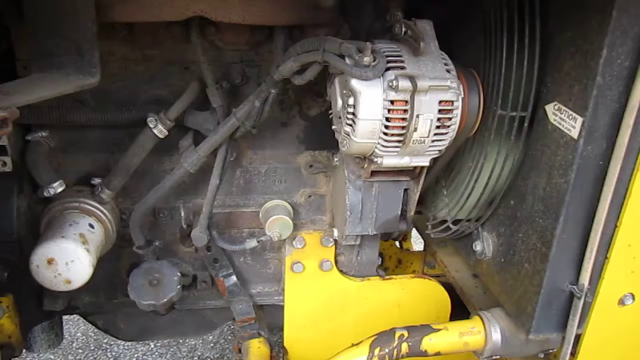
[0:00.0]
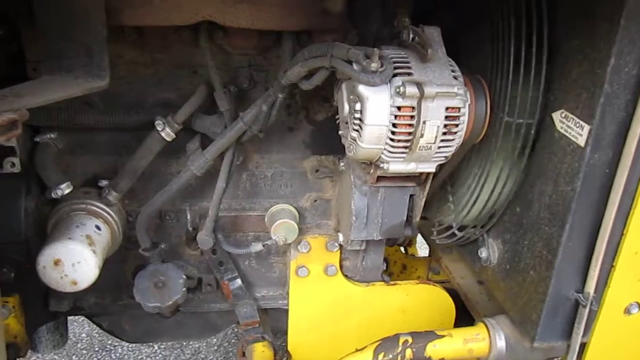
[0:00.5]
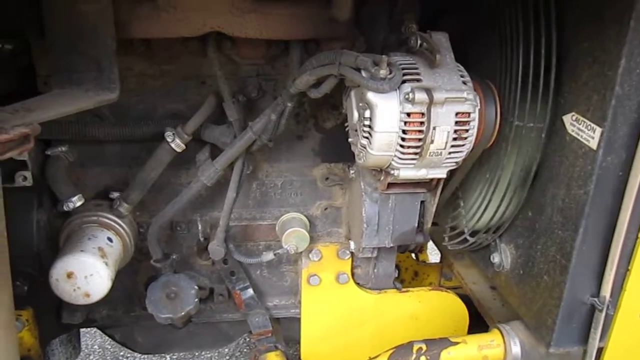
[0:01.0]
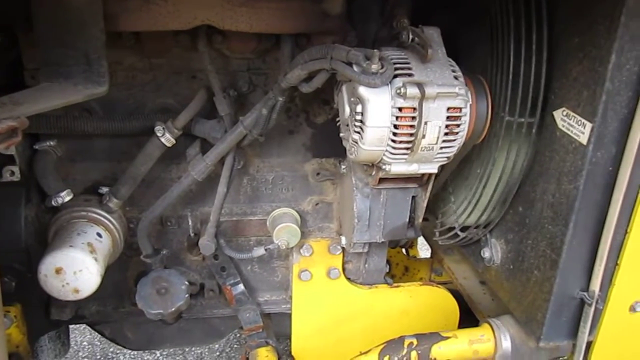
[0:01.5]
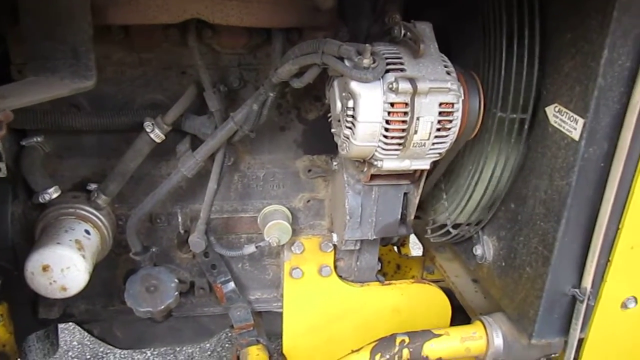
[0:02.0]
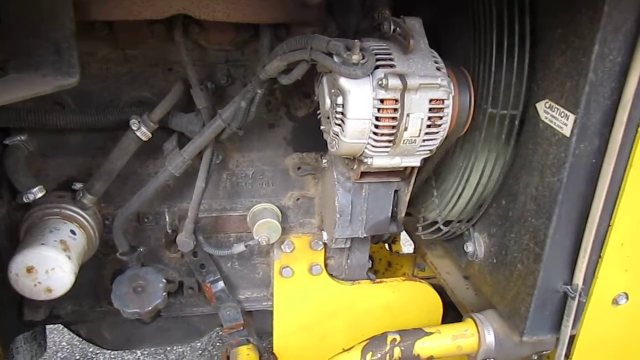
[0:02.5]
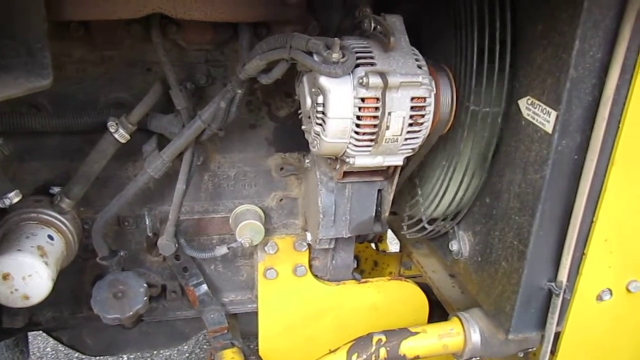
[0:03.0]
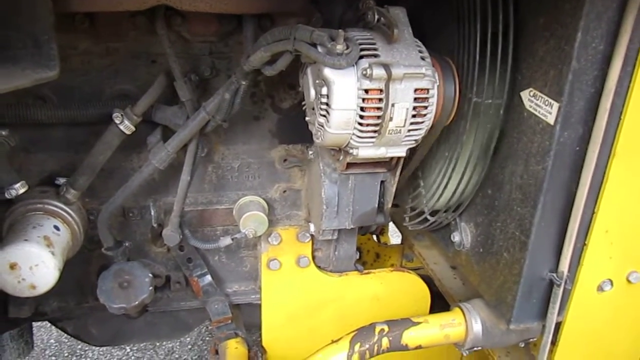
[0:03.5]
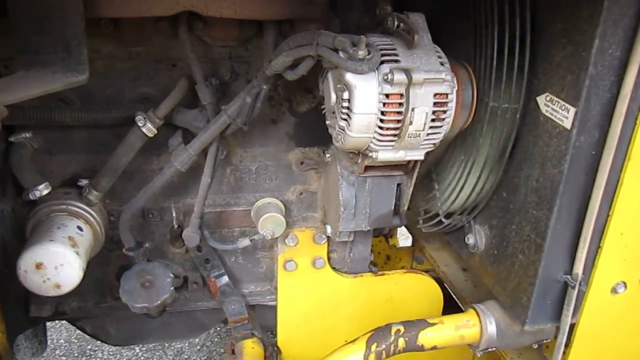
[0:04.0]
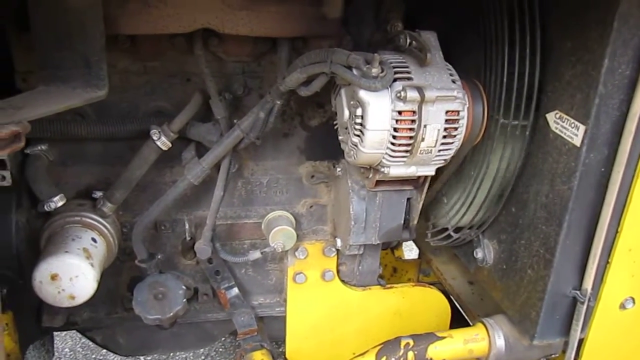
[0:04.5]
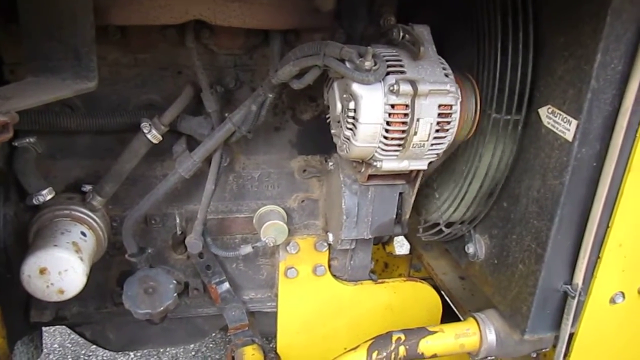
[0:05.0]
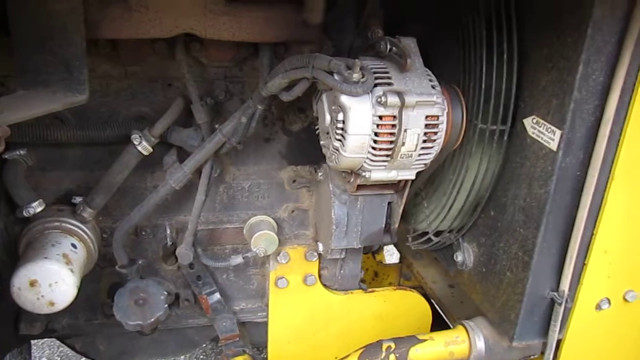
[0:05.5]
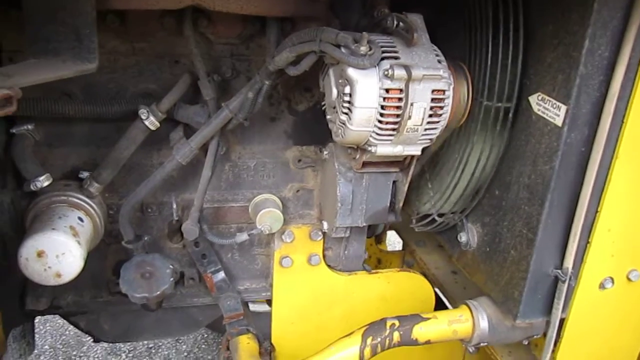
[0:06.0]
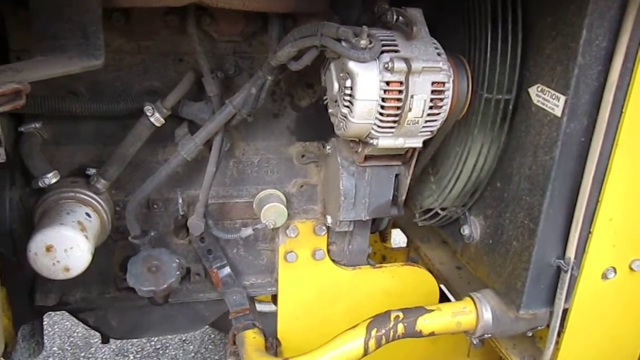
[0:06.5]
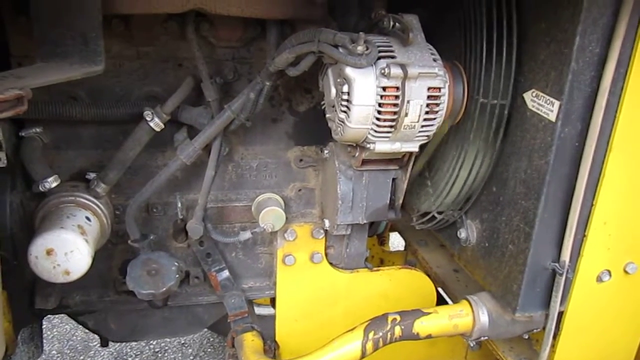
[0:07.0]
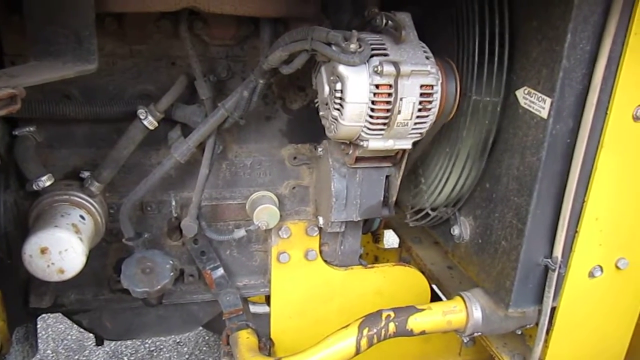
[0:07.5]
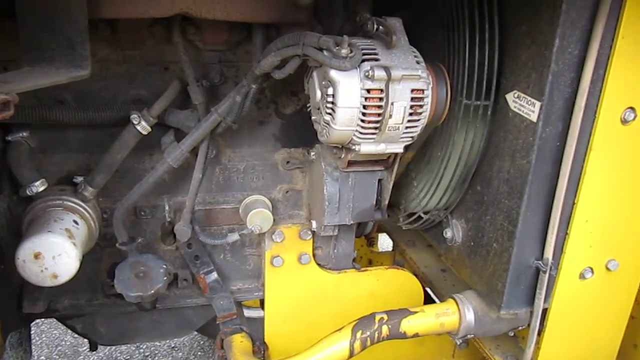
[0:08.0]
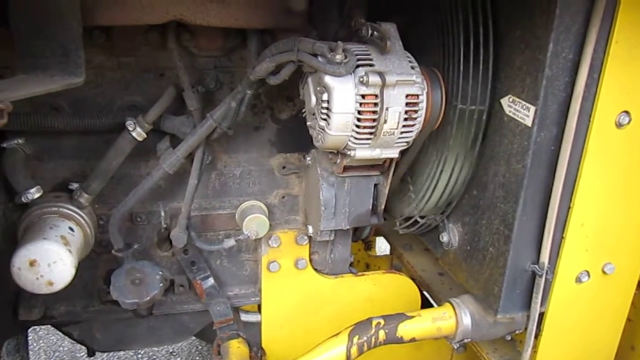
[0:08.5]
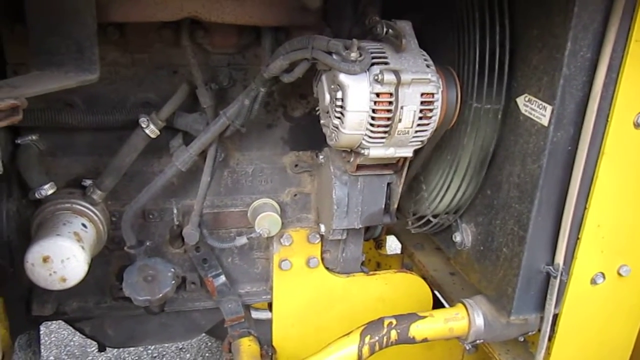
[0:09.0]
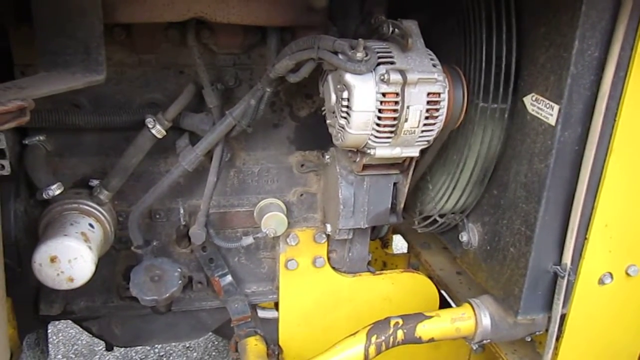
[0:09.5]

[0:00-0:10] What looks like an engine is visible on a vehicle that appears yellow, with its outside or trim apparently yellow. A caution sticker off to the right side carries about five words of information, too small to make out. The engine is attached to a fan, and the fan and a belt on the engine are moving pretty fast. A few dirty pipes are connected to the engine.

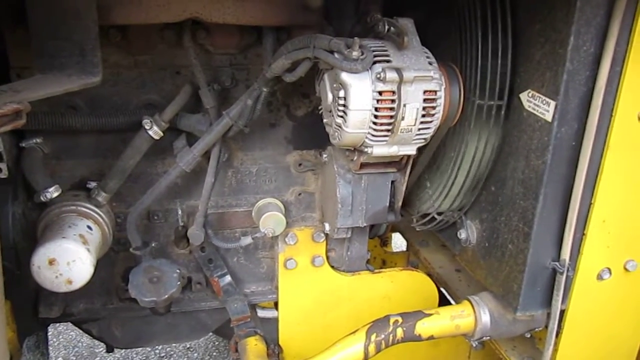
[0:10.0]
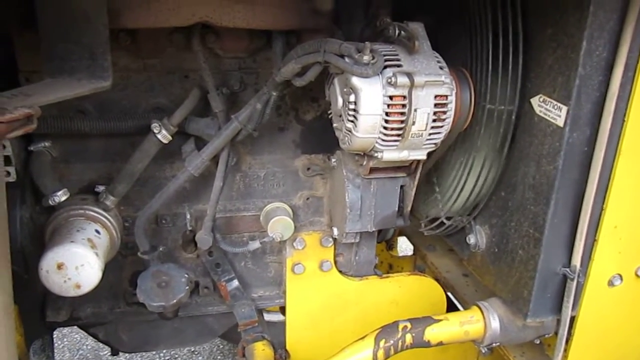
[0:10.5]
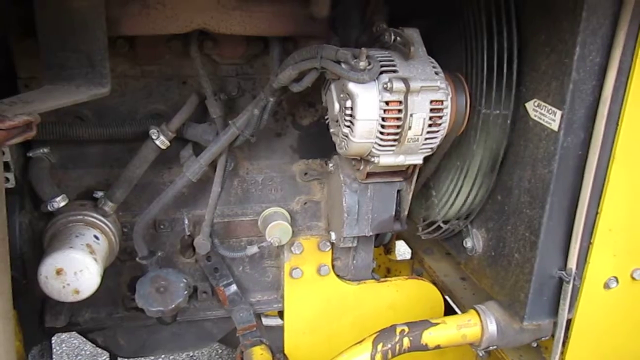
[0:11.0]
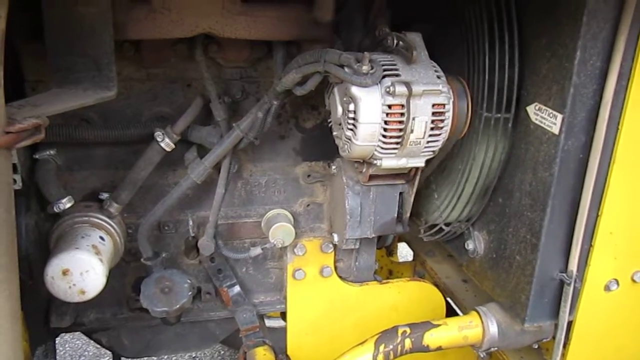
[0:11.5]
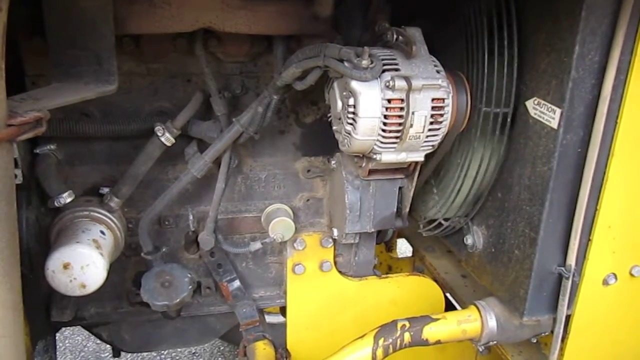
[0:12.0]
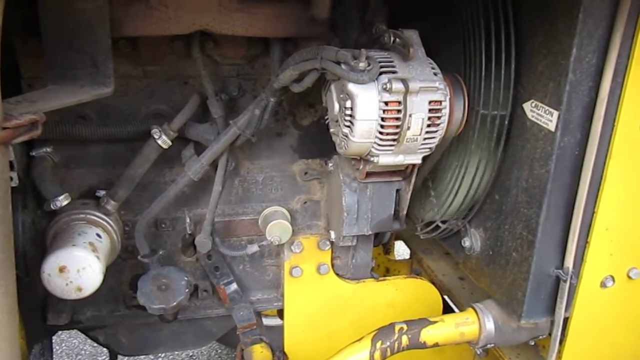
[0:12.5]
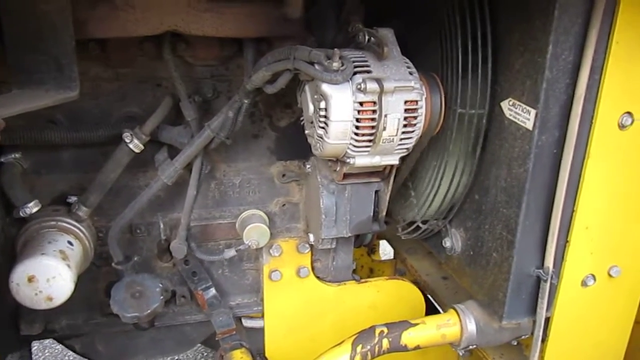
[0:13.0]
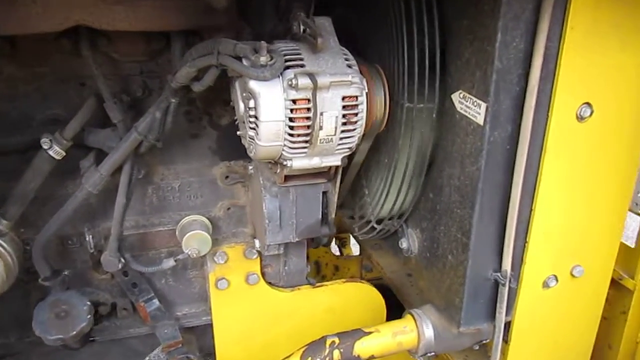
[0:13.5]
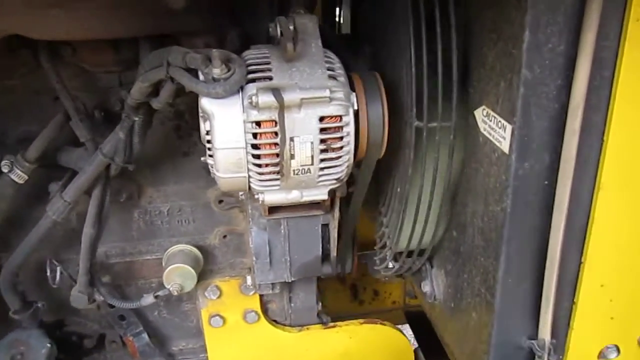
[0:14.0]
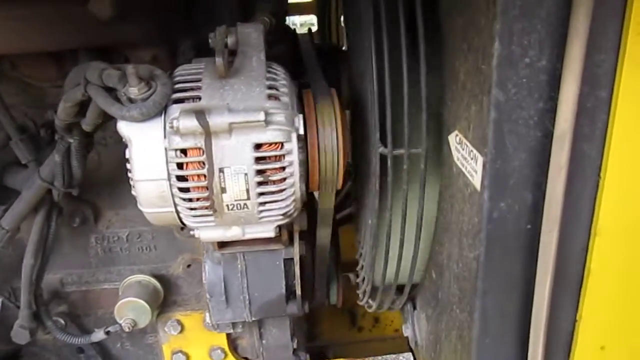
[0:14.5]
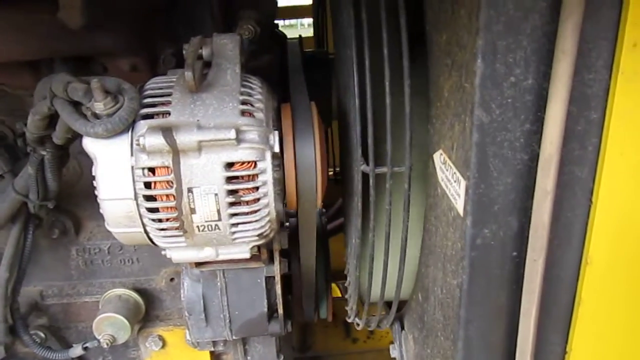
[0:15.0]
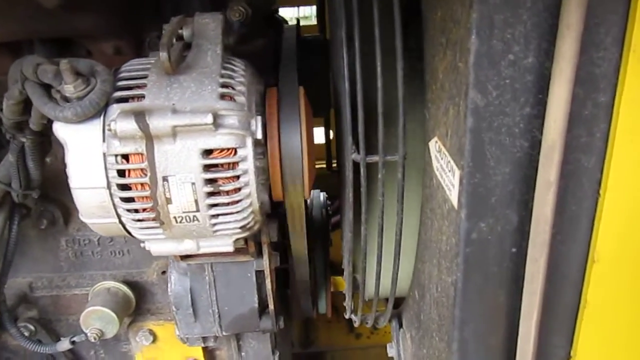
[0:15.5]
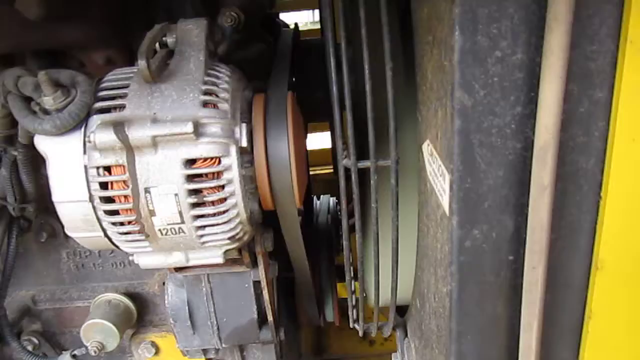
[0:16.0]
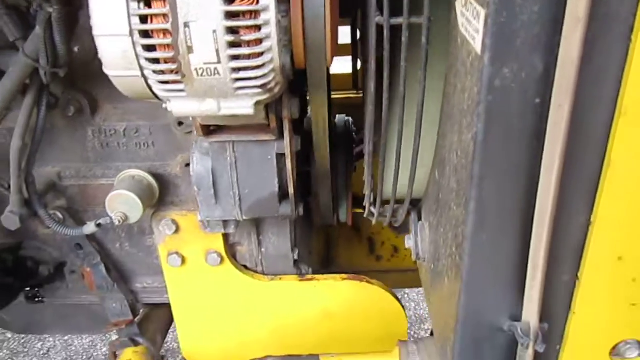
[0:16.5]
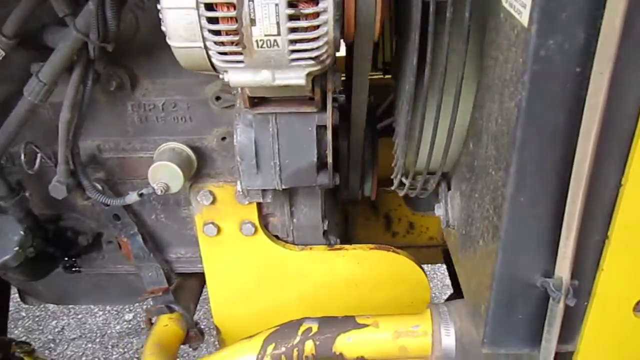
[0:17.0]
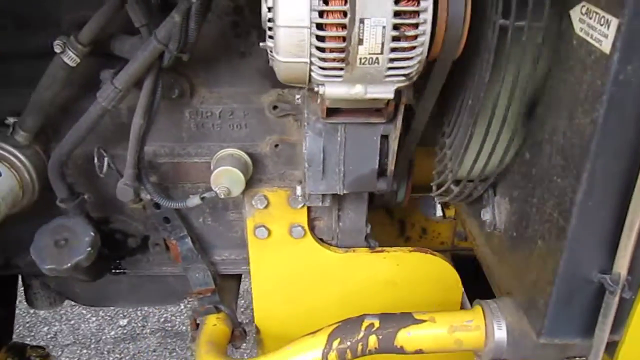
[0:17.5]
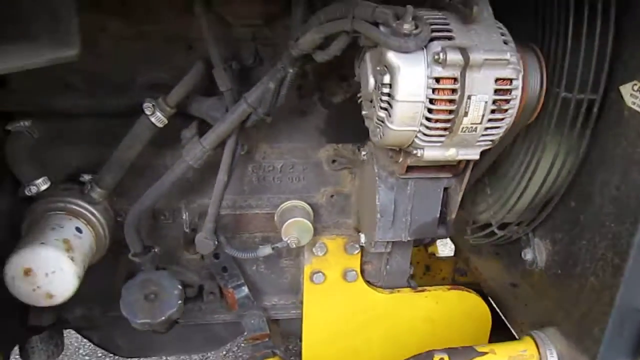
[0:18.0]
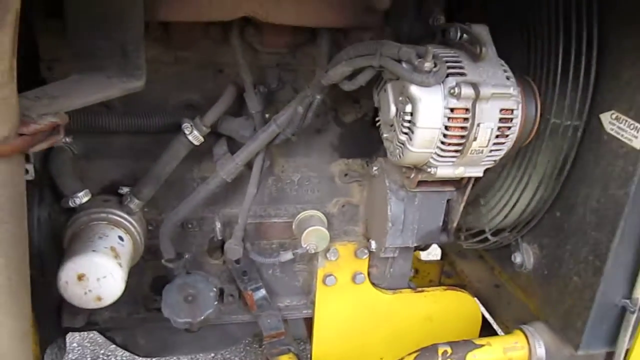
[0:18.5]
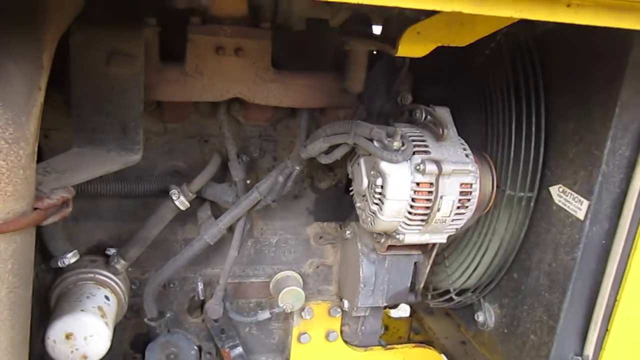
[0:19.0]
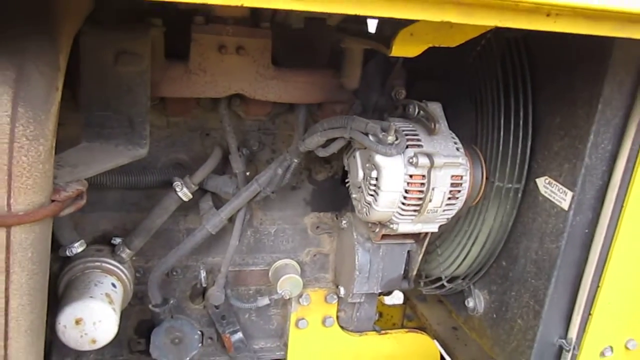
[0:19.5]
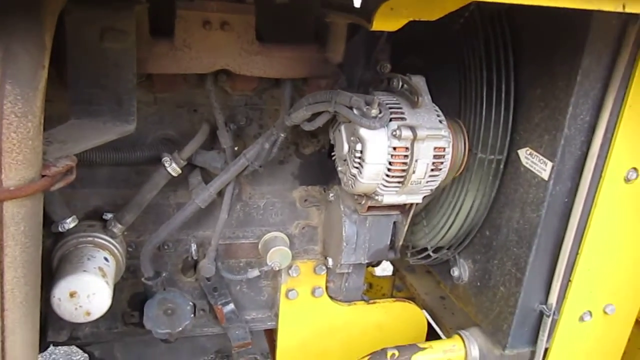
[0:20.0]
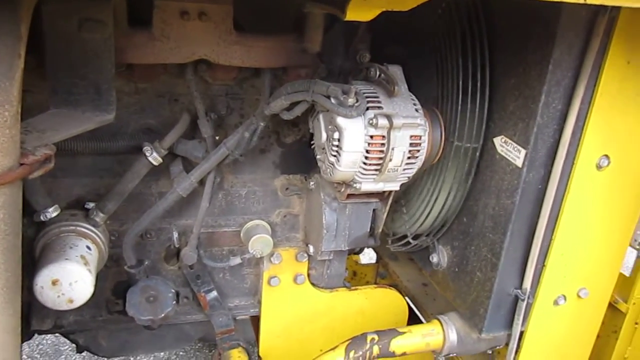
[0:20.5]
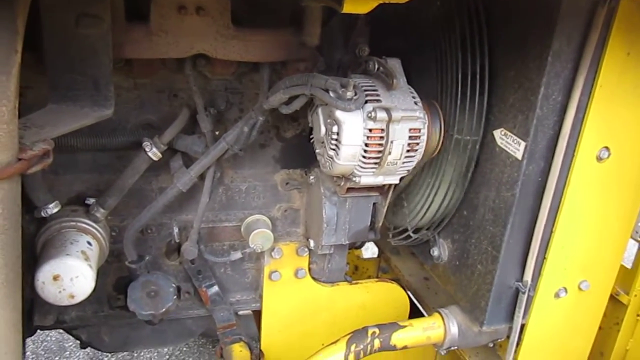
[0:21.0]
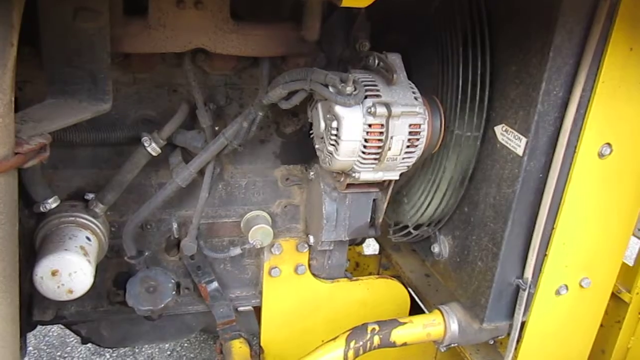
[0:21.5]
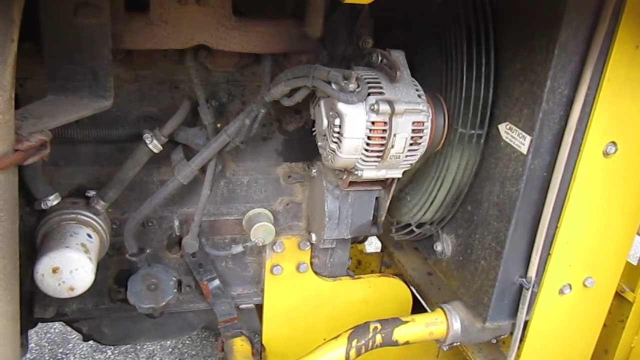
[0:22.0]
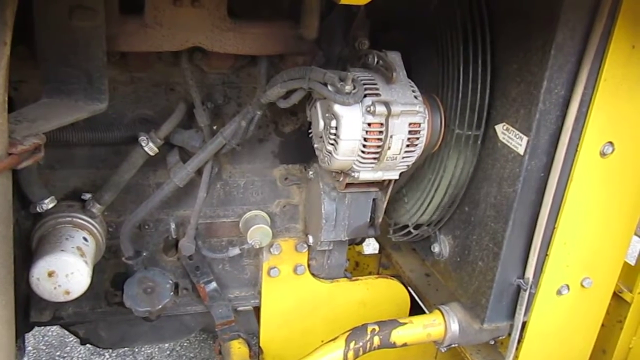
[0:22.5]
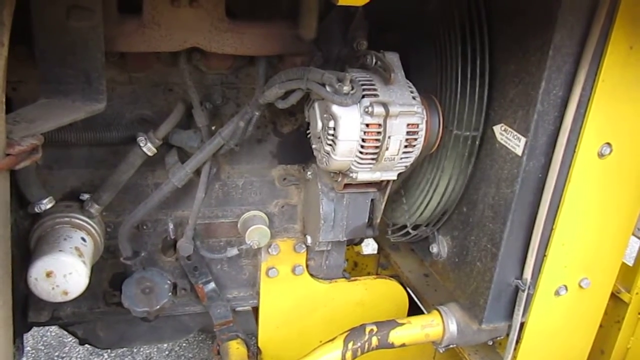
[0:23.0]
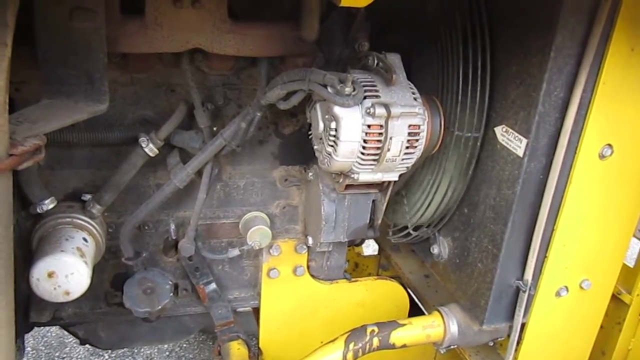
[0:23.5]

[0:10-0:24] The engine continues to spin, as does the belt. A sticker on the engine has a lot of information, with a combination of words and numbers at the bottom that includes "120A". Something also appears to be engraved at the very bottom. The camera seems to be trying to show the label: it kind of zooms in to the label and then zooms back out. What appears to be a gas casket is off to the left.